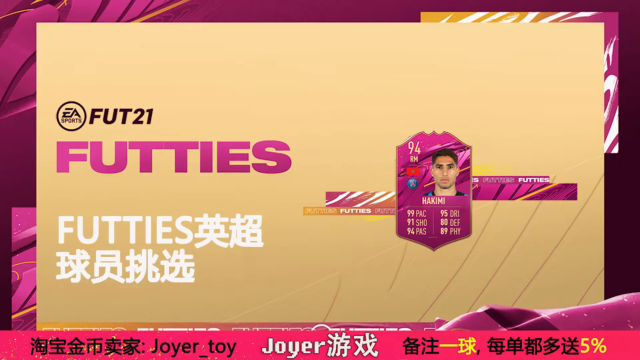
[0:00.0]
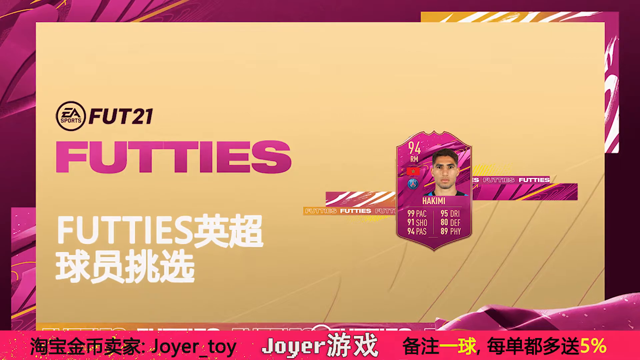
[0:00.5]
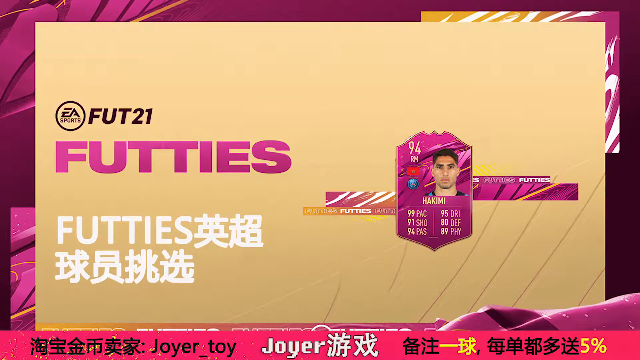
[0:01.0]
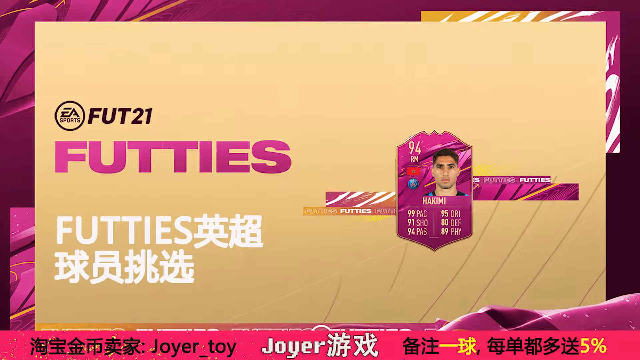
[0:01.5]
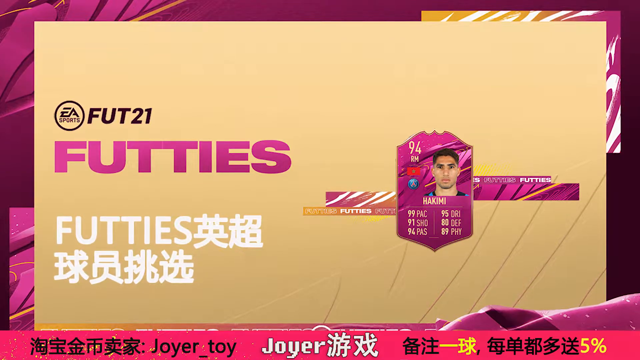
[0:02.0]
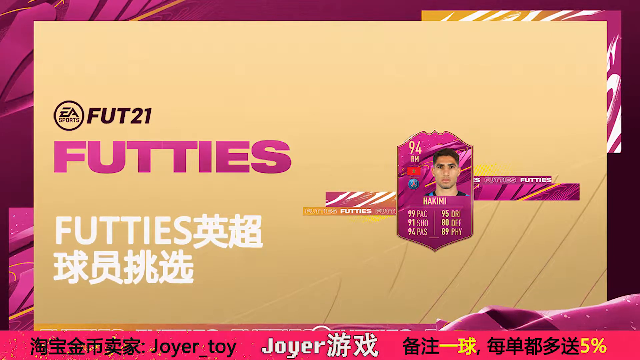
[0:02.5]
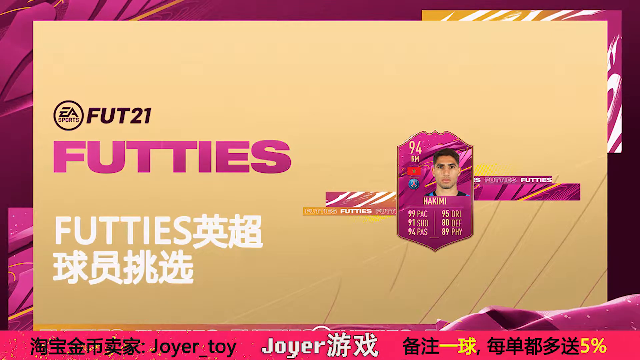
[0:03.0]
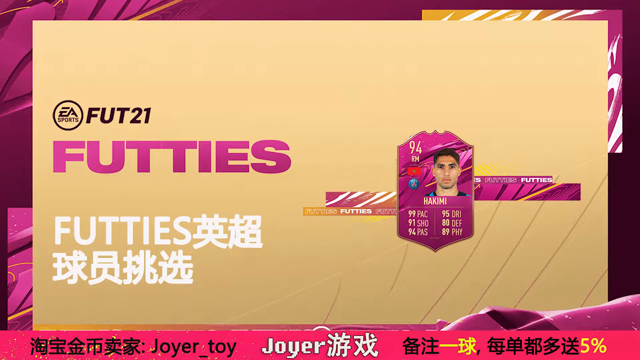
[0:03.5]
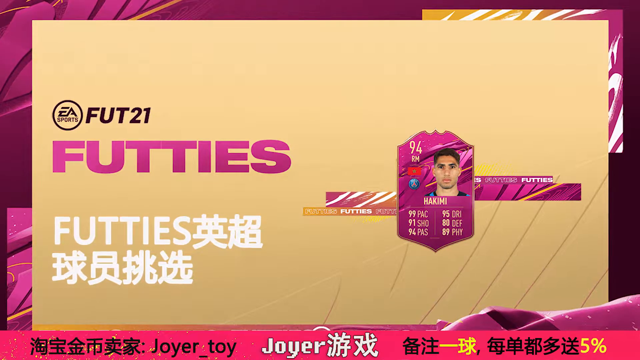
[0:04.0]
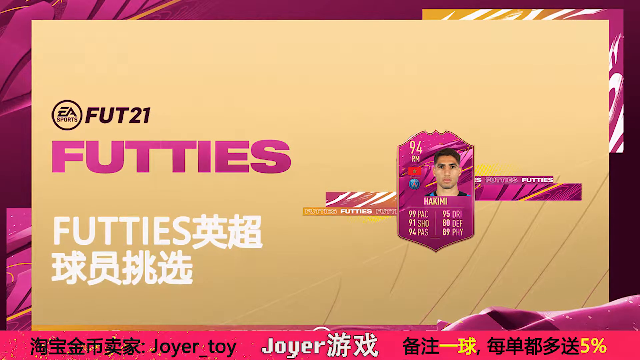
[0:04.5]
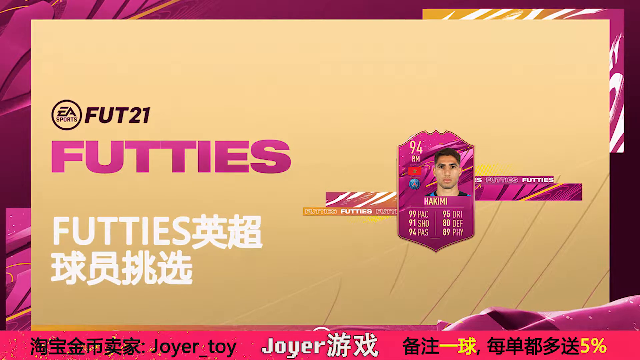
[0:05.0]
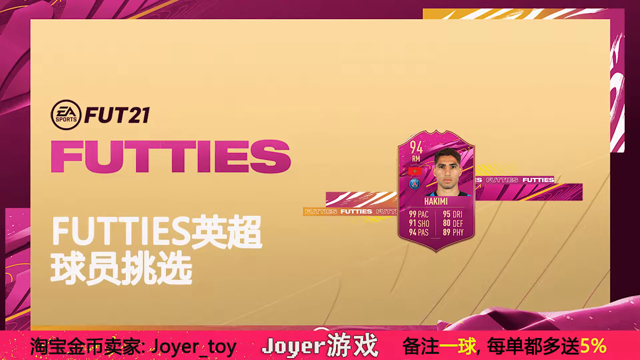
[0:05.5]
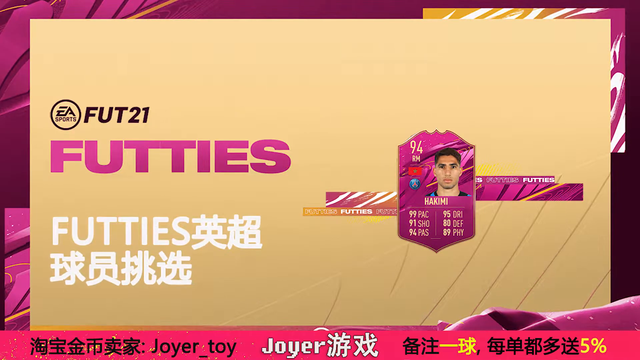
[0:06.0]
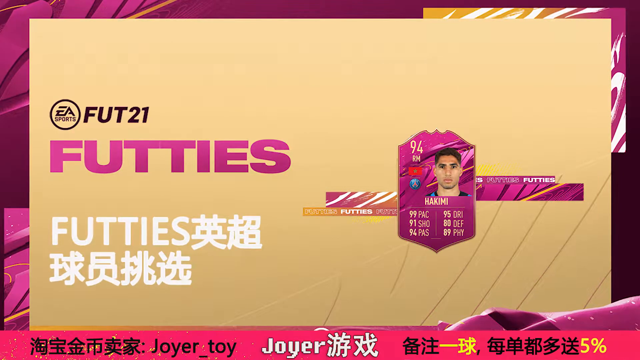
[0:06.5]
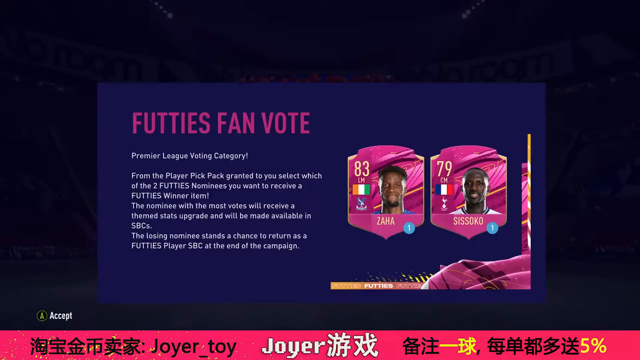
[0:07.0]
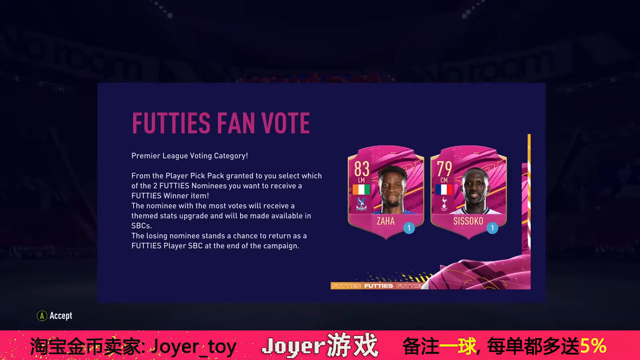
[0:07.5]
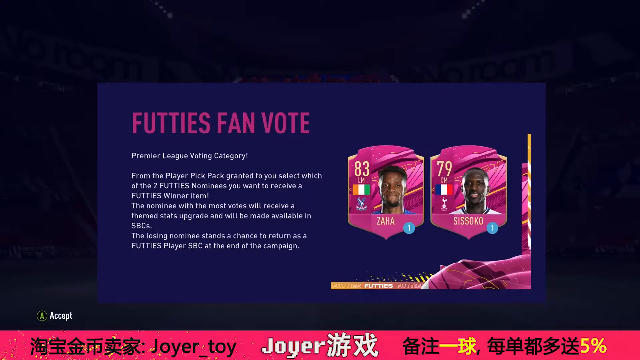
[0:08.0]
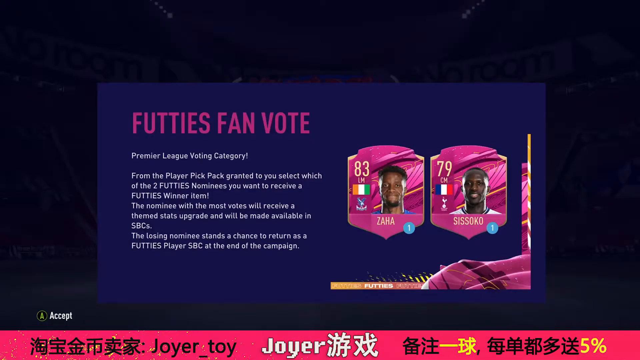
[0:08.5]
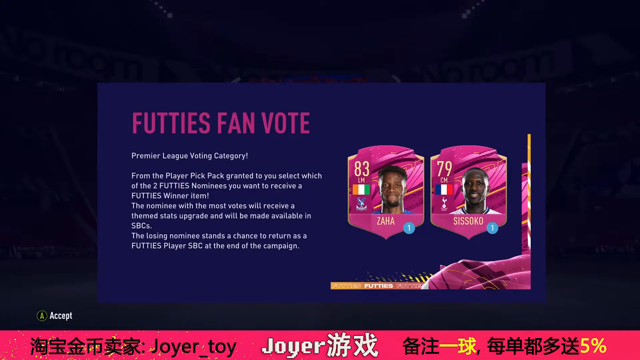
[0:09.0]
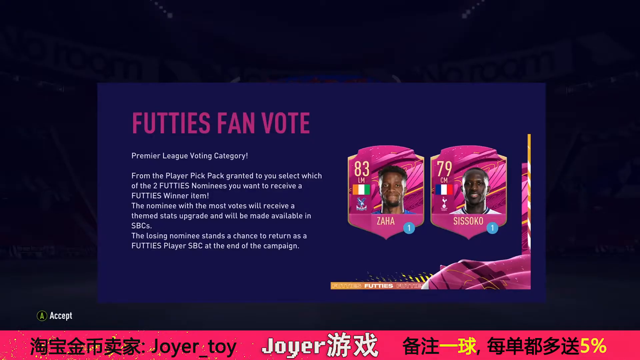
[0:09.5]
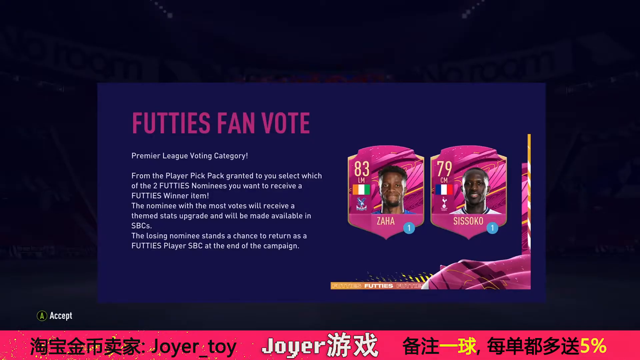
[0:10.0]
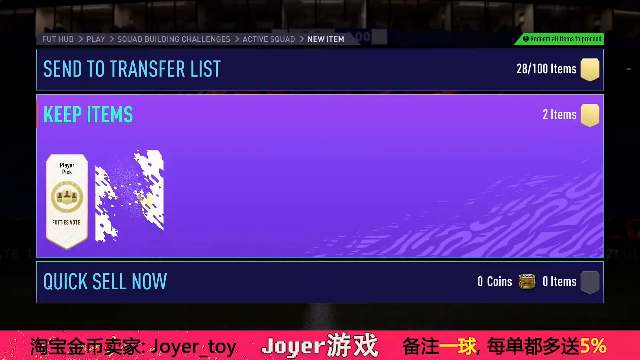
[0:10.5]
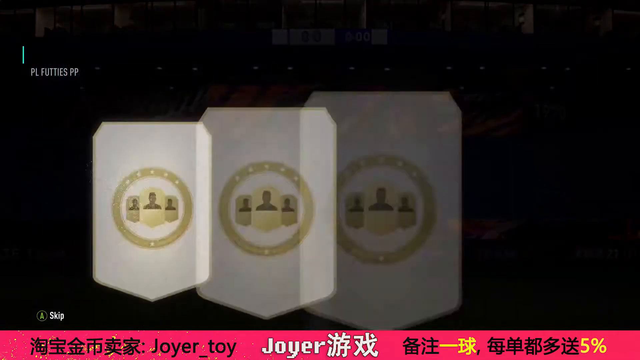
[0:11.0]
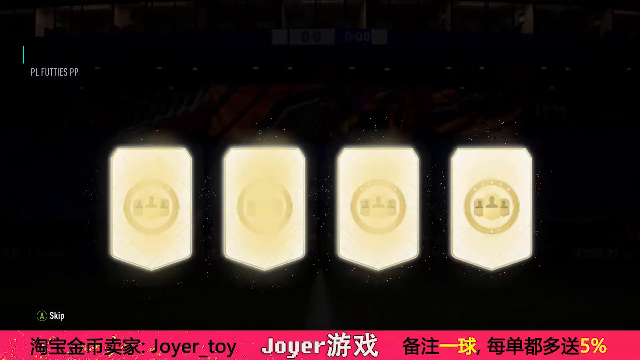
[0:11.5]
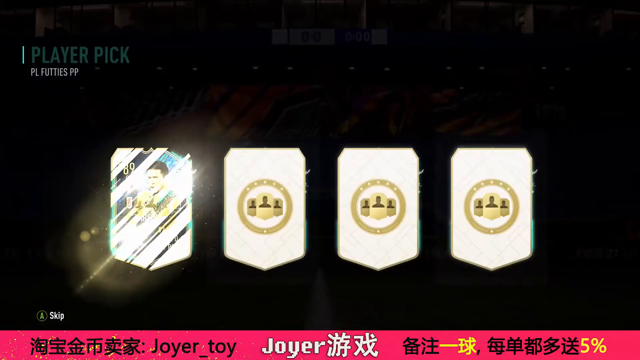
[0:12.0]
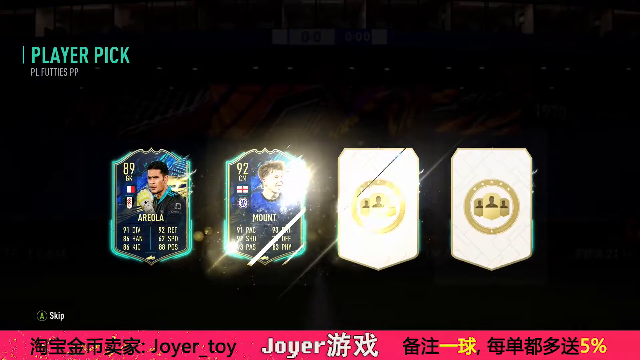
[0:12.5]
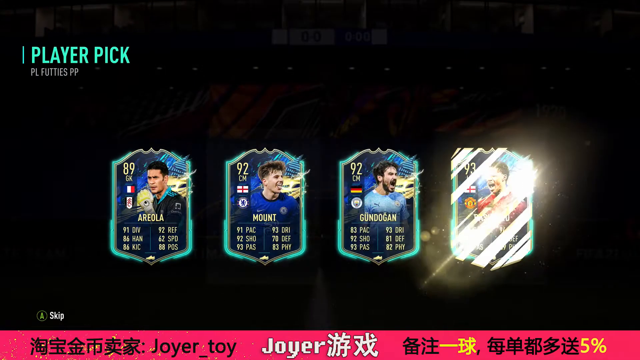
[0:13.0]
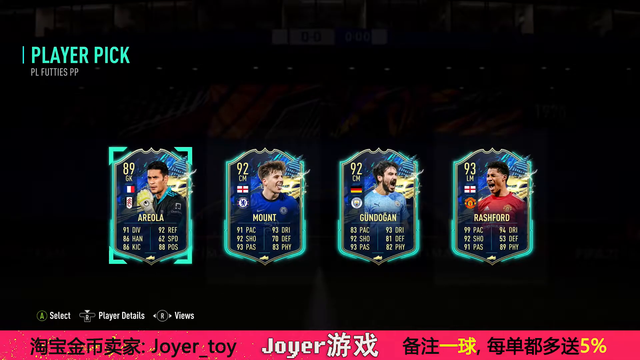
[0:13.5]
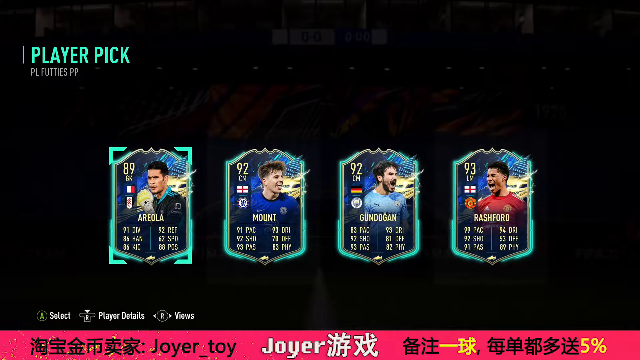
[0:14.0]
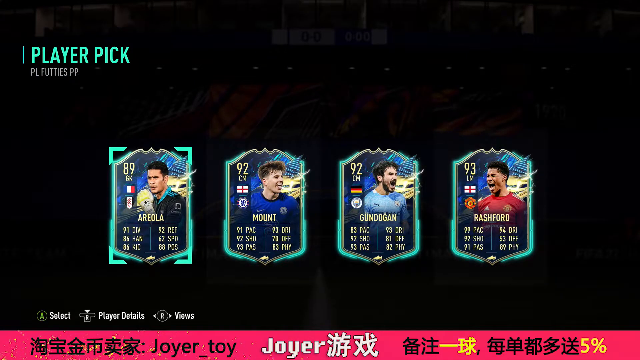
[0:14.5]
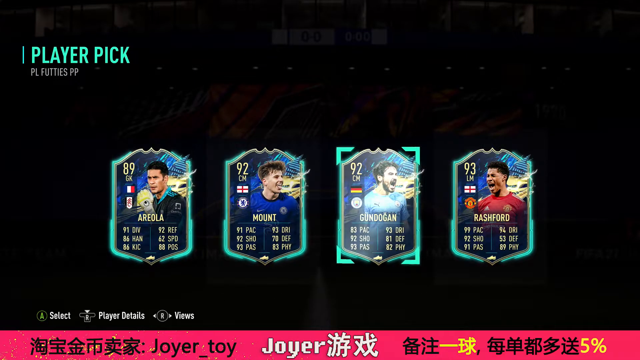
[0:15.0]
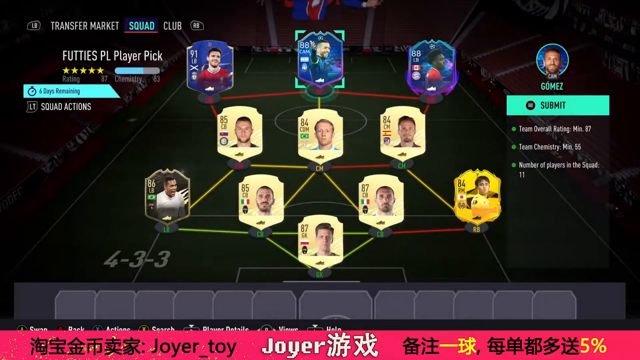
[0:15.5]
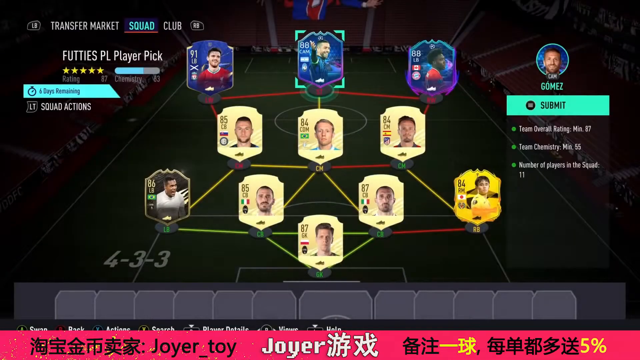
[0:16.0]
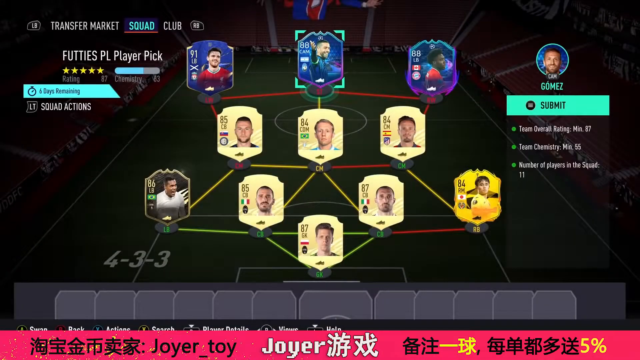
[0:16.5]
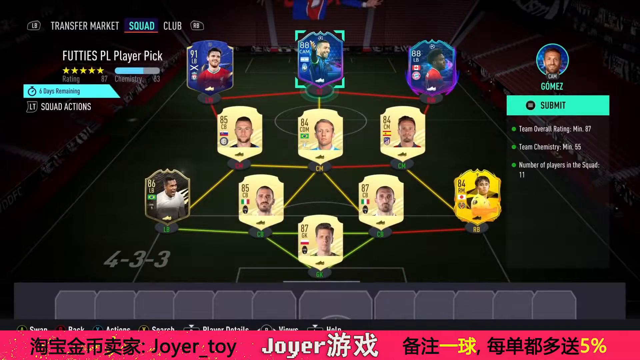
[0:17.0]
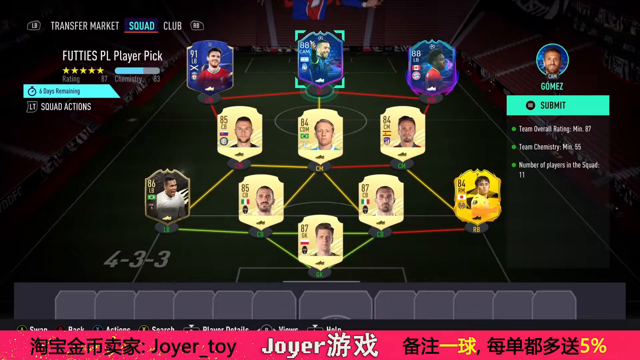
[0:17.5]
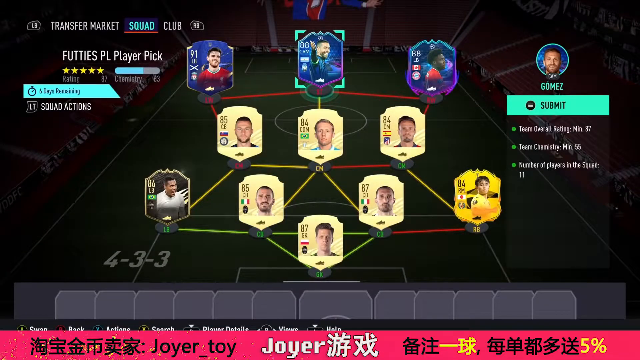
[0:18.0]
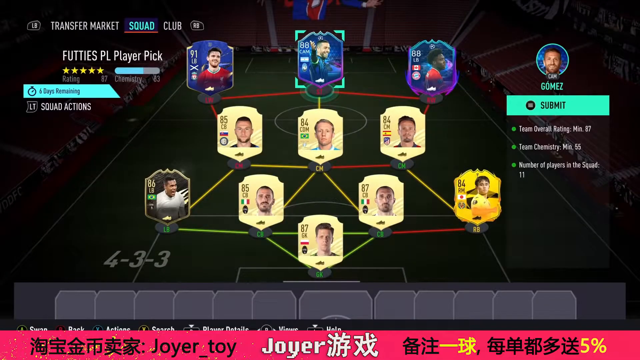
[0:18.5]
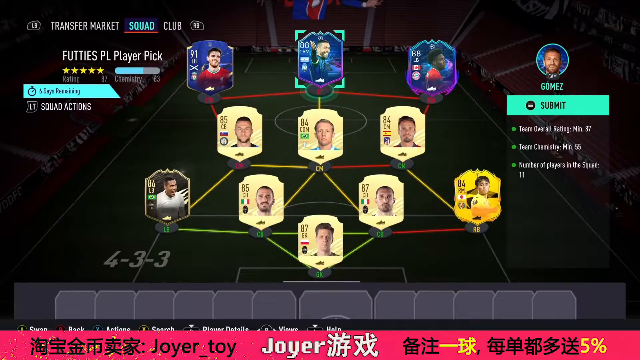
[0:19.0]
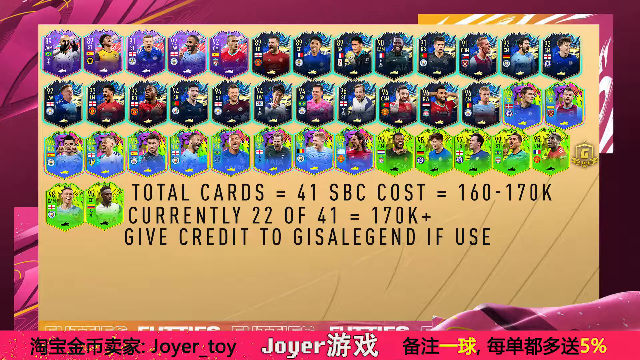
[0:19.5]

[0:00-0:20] The video opens on a still of what looks like a business card type image set against a swirly purple background with some yellow behind it. The card itself is yellow and uses different colored fonts. Black text reads "FUT21", next to a circle with "EA Sports", and underneath, in very large purple font, it says "futties". Below that are six Asian symbols. There is a picture of a person, apparently a soccer player, named Hakimi, marked "94 RM", along with what looks to be a red flag with a silver or gold star. The card lists the player's stats: "99 PAC", "91 SHO", "94 PAS", "95 DRI", "80 DEF" and "89 PHY". Underneath is something that says "a Joyer" followed by some symbols. The video then cuts to another screen, entirely in English, that says "Futties Fan Vote" for the Premier League voting category, showing pictures of two different people, one at level 83 and one at level 79.